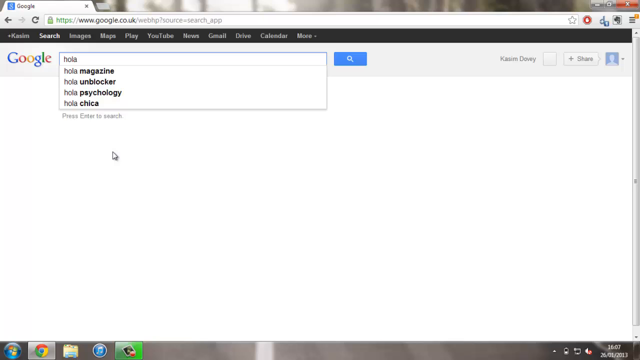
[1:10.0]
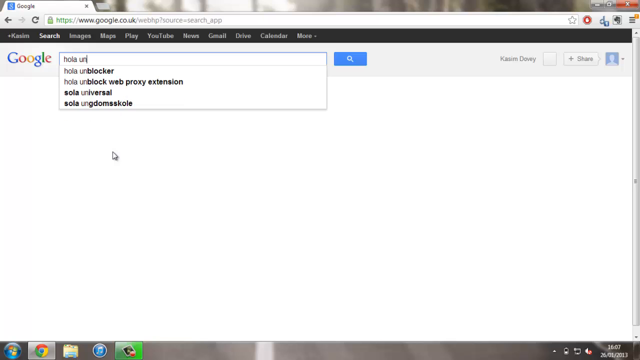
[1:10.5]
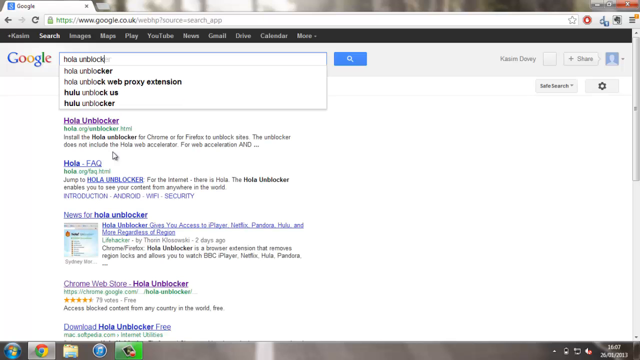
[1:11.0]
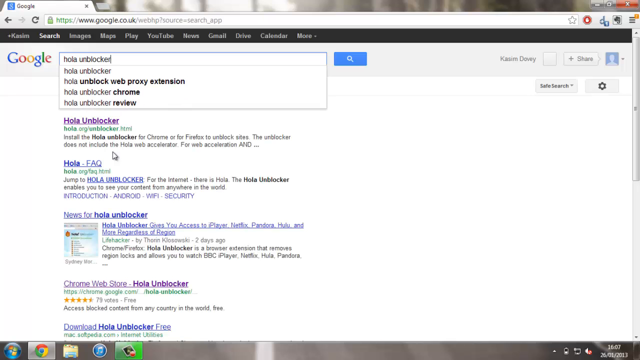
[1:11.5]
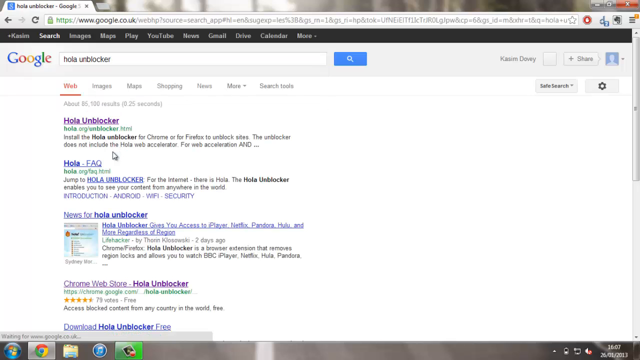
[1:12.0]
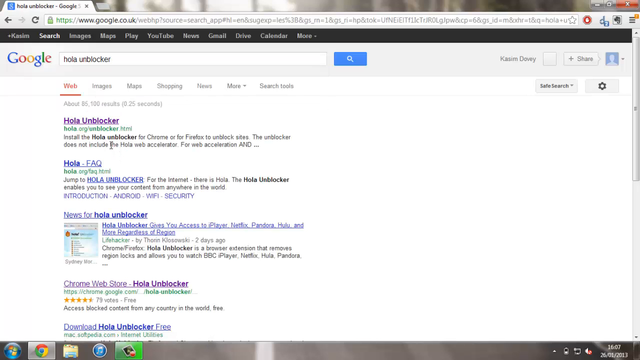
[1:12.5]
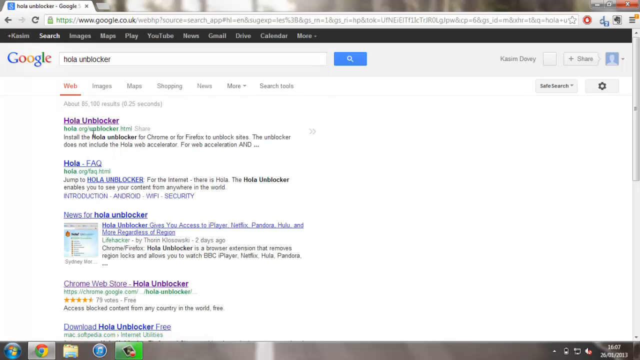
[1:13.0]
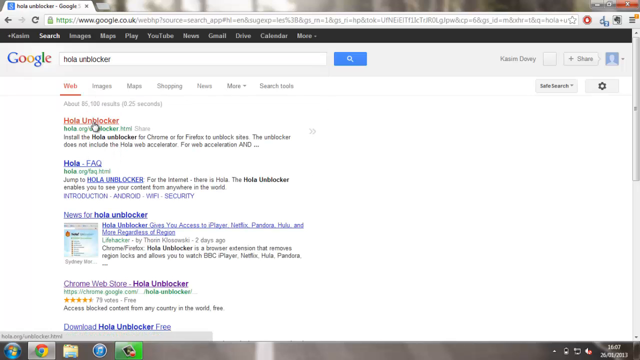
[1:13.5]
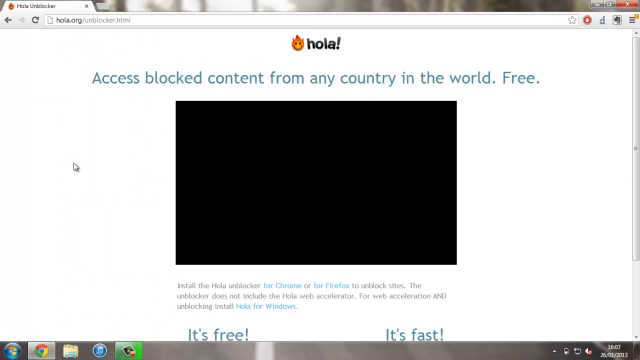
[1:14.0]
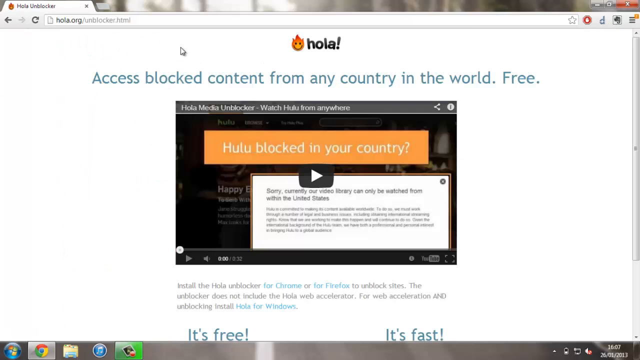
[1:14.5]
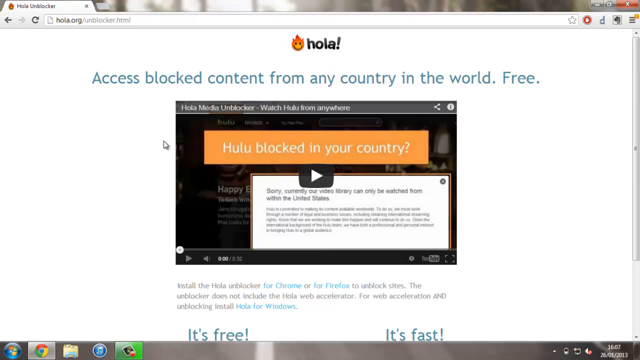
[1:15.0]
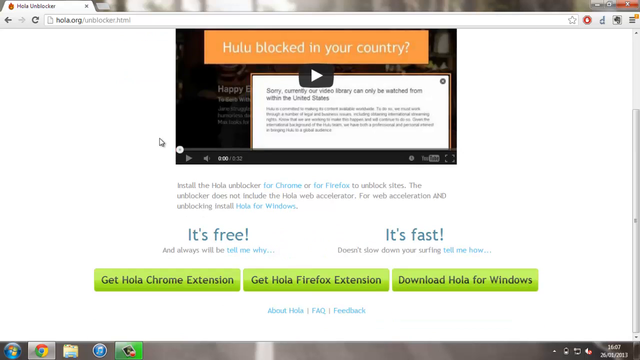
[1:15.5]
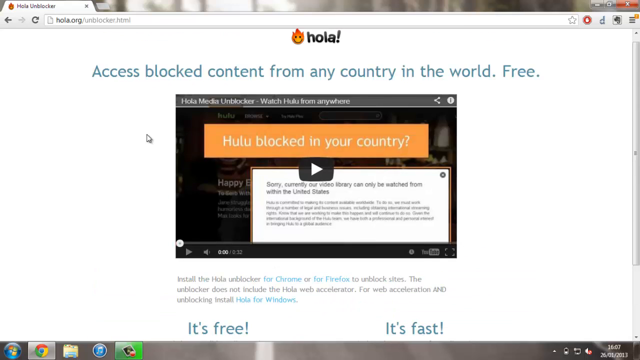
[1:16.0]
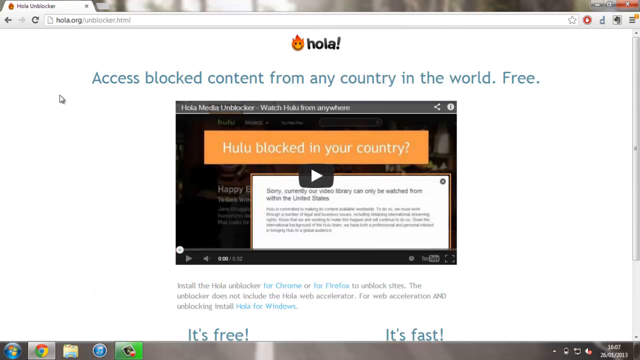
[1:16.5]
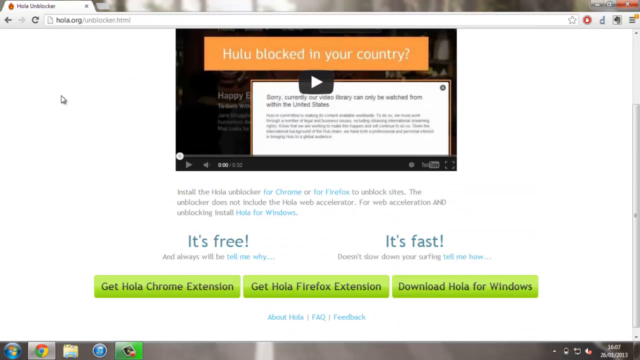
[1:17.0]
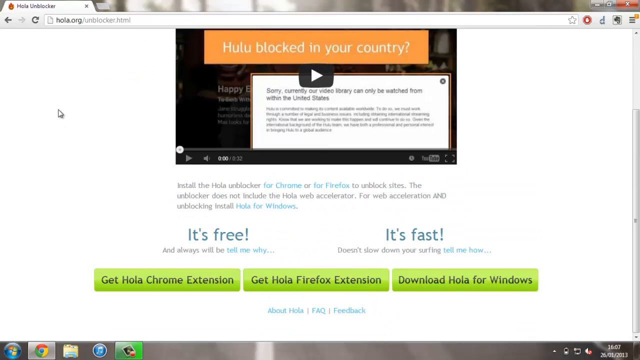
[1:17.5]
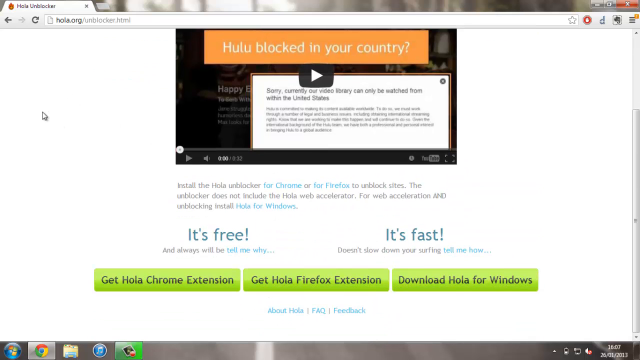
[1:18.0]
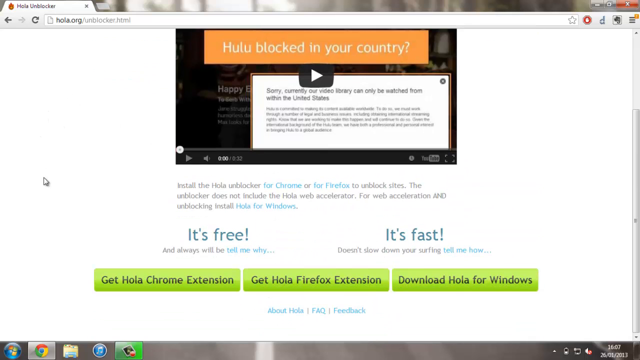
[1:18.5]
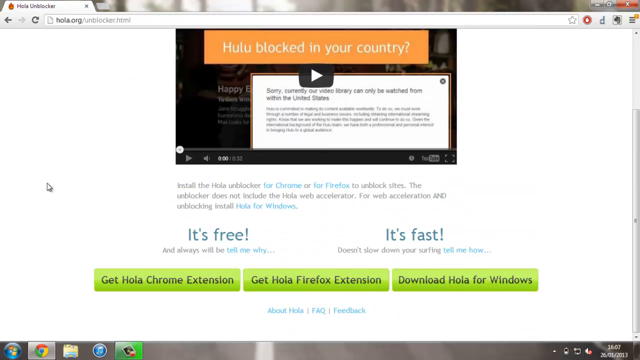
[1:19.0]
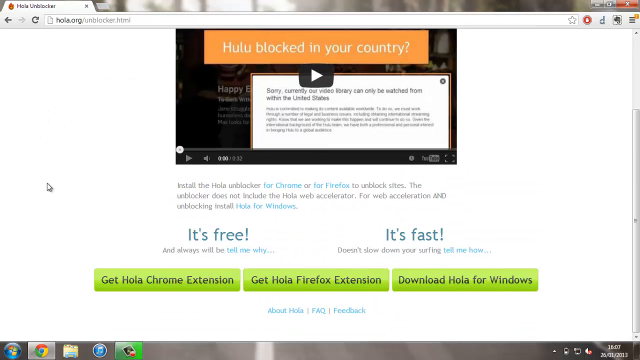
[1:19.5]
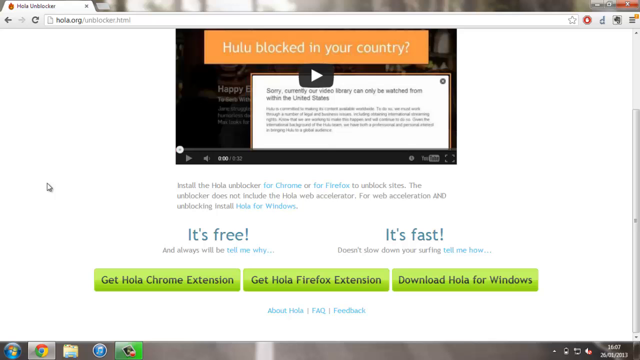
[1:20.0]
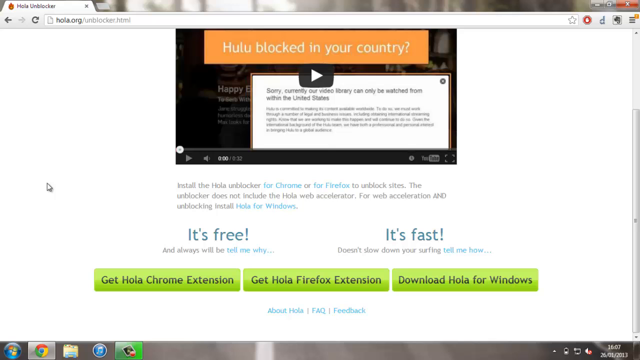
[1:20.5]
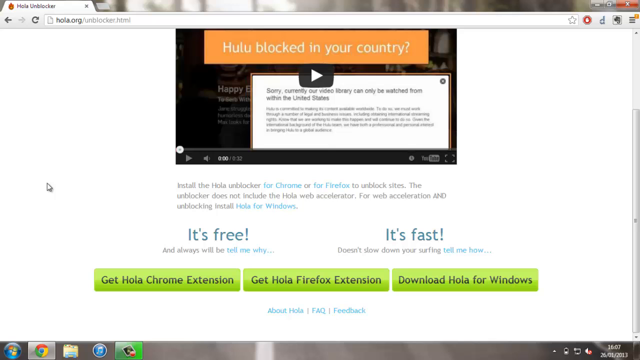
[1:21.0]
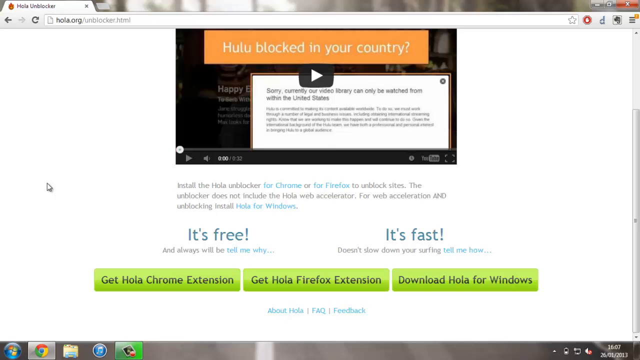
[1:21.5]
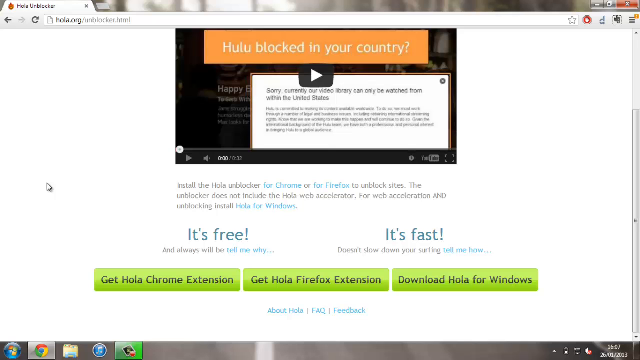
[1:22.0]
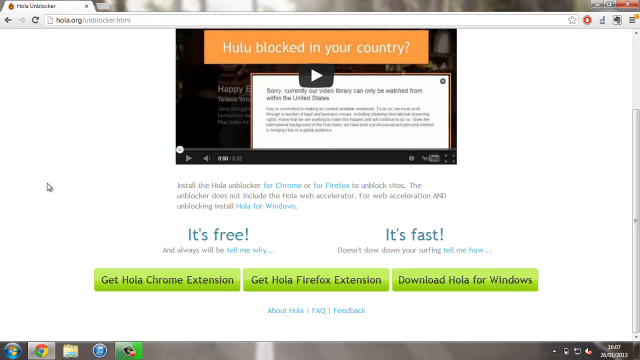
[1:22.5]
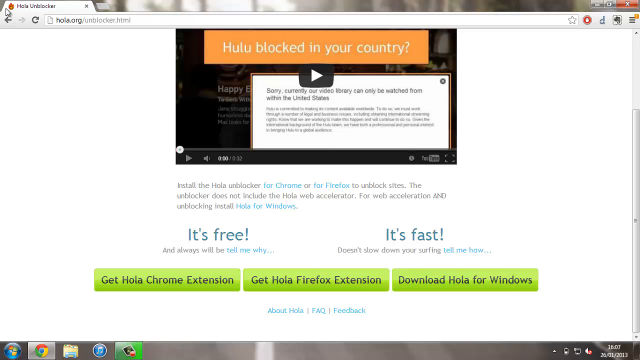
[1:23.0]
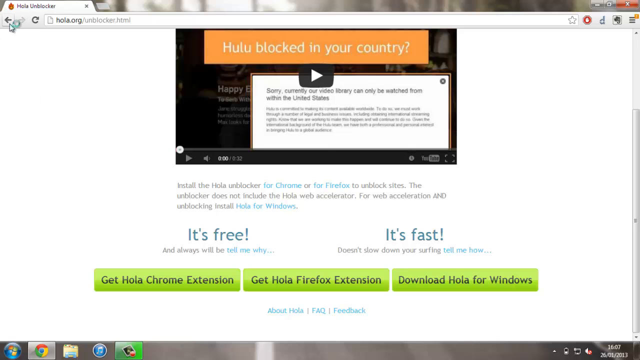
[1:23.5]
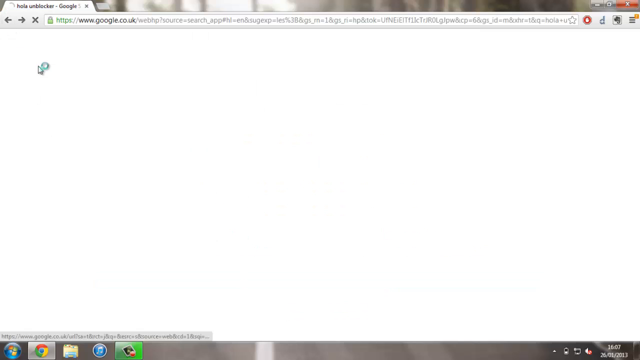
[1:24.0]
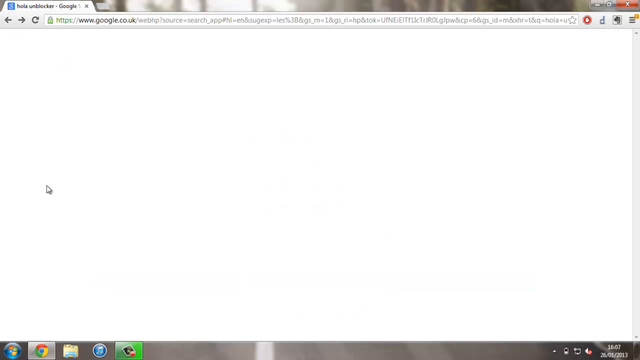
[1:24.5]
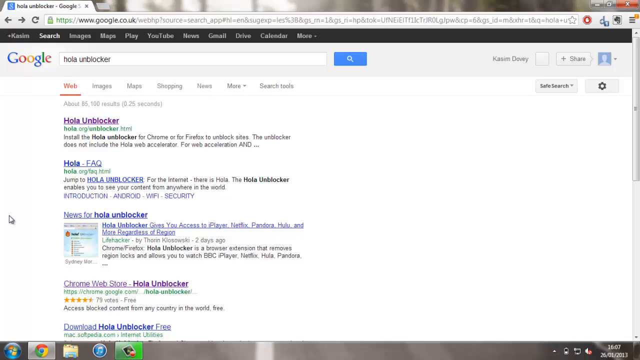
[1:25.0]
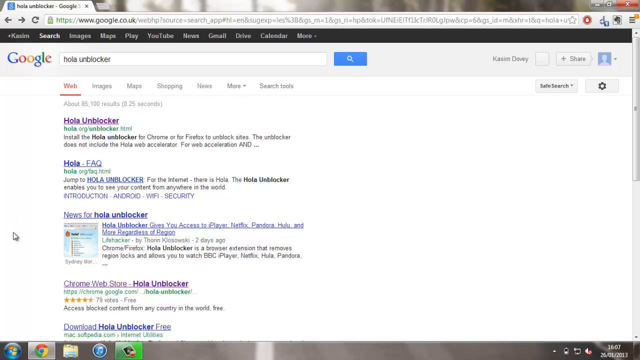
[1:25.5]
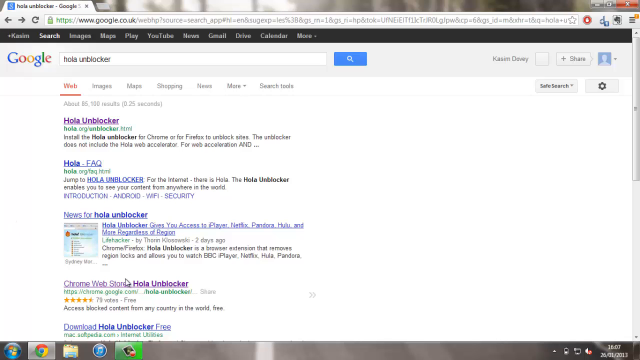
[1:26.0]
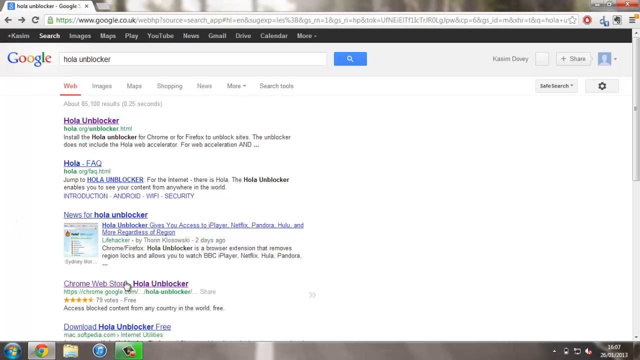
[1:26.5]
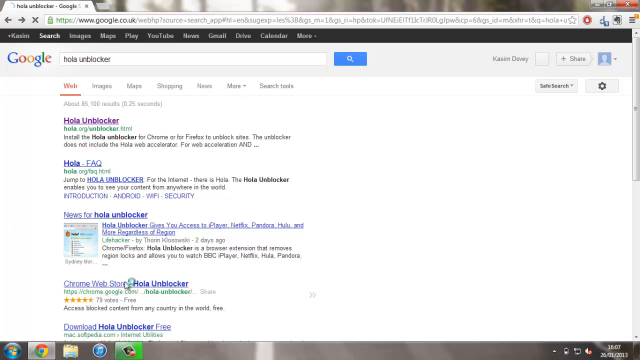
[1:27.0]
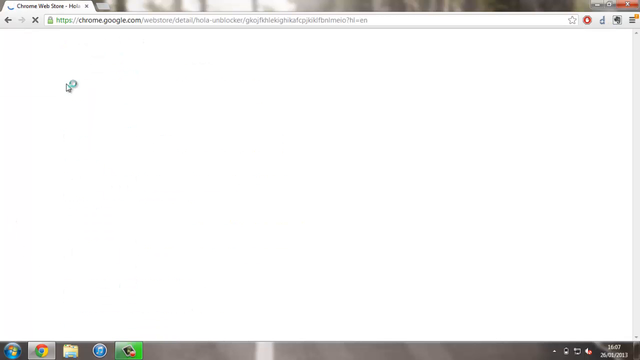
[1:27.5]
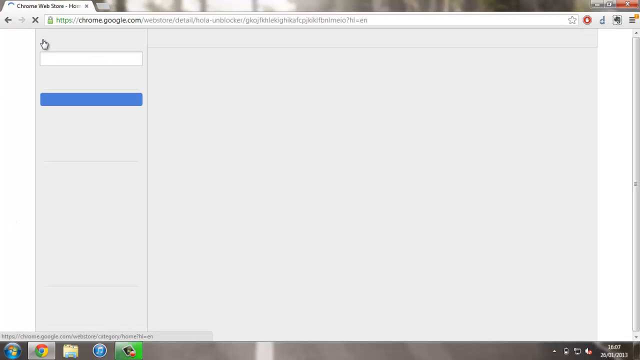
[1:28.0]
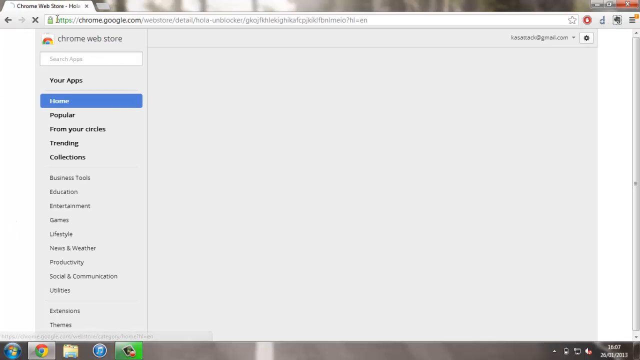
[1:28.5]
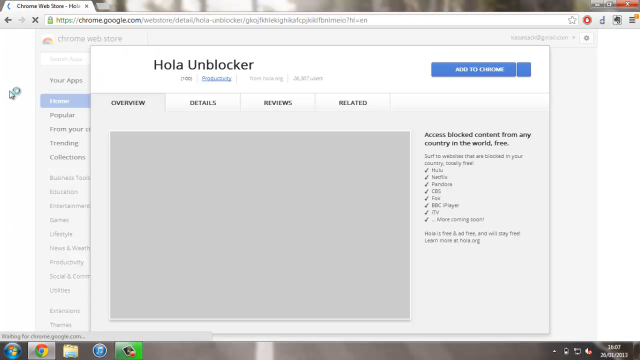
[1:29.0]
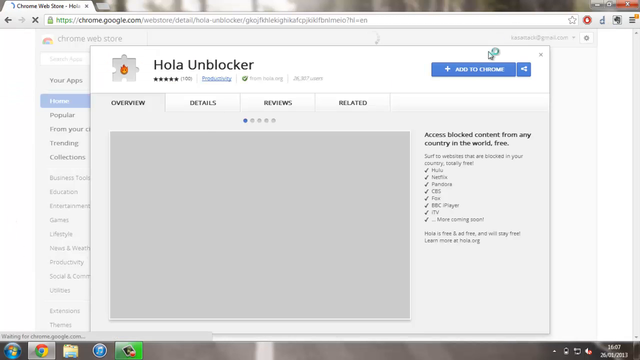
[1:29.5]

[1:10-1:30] The user continues typing "hola unblocker" and presses enter, bringing up a page of search results. The first result is Hola Unblocker, the second is the Frequently Asked Questions at hola.org, followed by news for Hola Unblocker reading "Hola Unblocker gives you access to iPlayer, Netflix", published two days ago on Lifehacker by Thorin Klasowitzky. Below that is the Chrome Web Store result for Hola Unblocker. The user clicks the topmost result and arrives at a page that says "Access blocked content from any country in the world, free". Scrolling down a bit reveals the options "Get Hola, Chrome extension", "Get Hola, Firefox extension" and "Download Hola for Windows". After a second, the user clicks the Back button, returning to the search results, and this time clicks the fourth result, for the Chrome Web Store. The cursor instantly swoops down and clicks the Add to Chrome button, on the right side of the screen near the top.